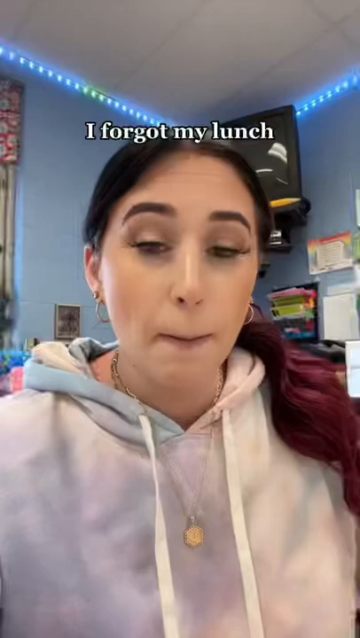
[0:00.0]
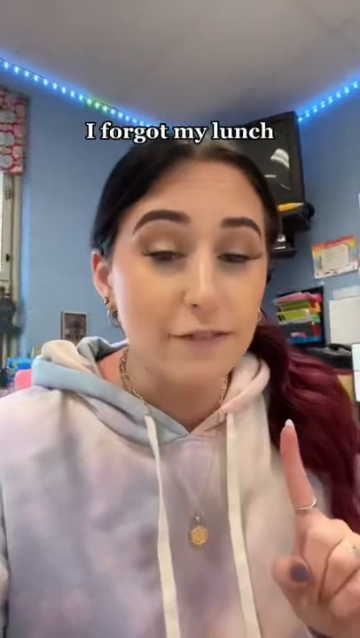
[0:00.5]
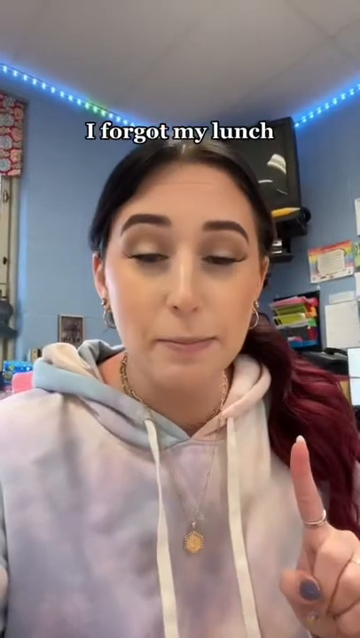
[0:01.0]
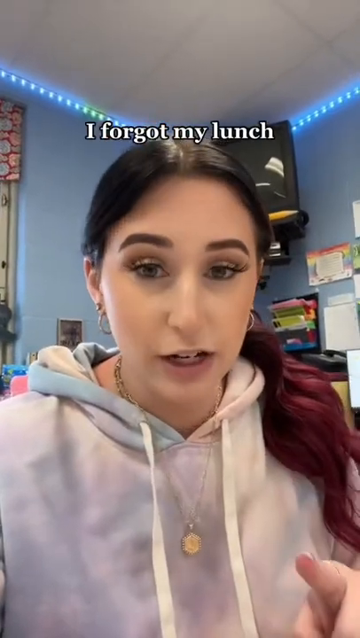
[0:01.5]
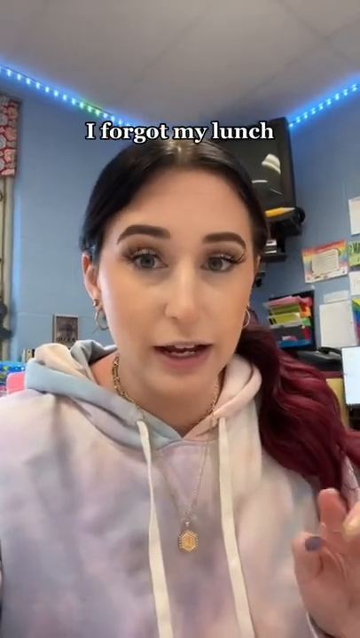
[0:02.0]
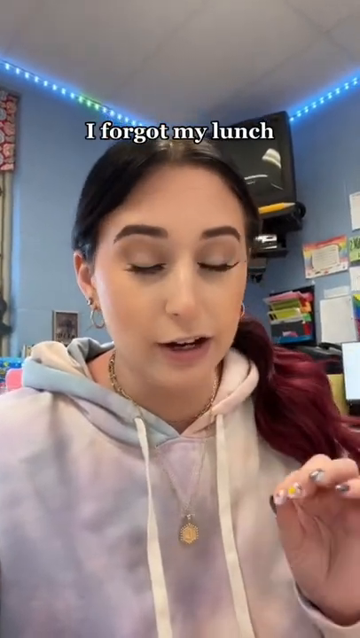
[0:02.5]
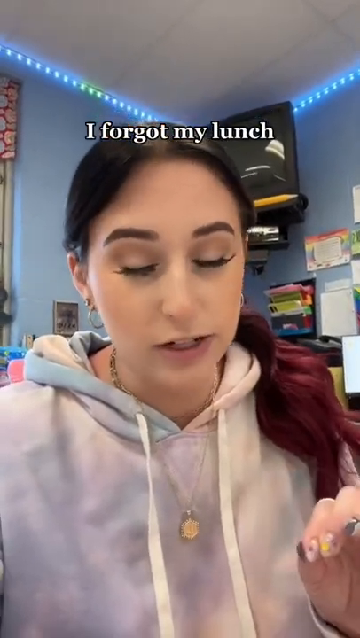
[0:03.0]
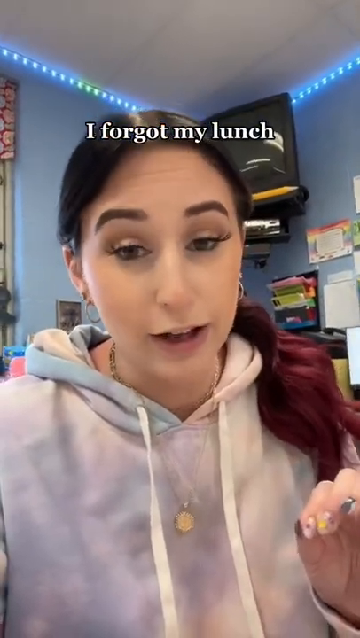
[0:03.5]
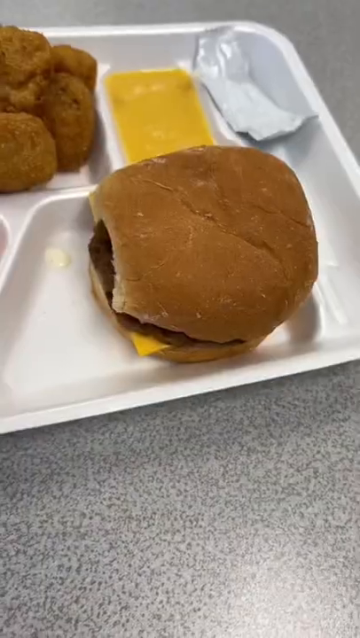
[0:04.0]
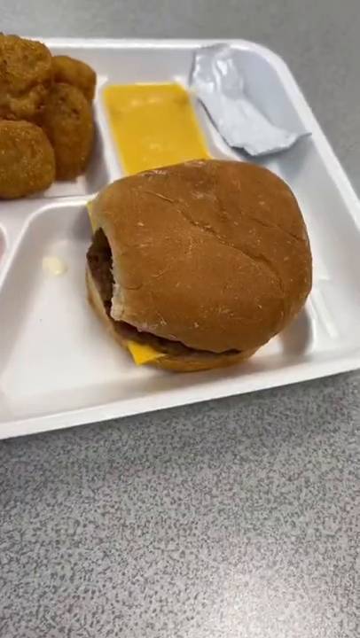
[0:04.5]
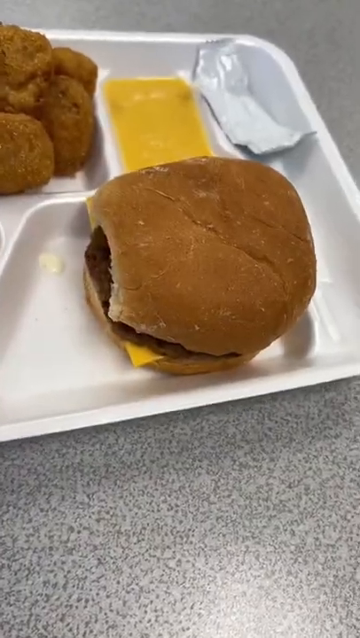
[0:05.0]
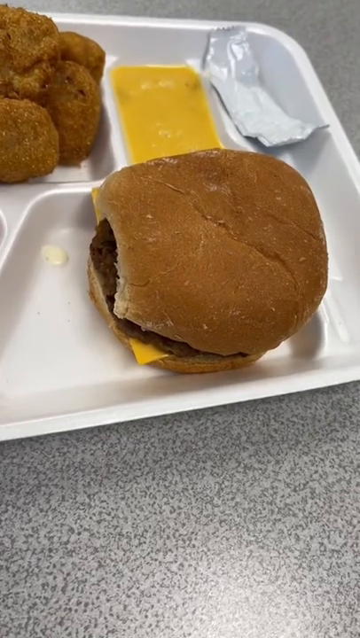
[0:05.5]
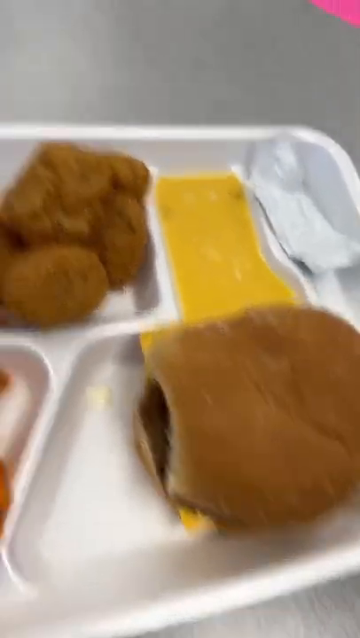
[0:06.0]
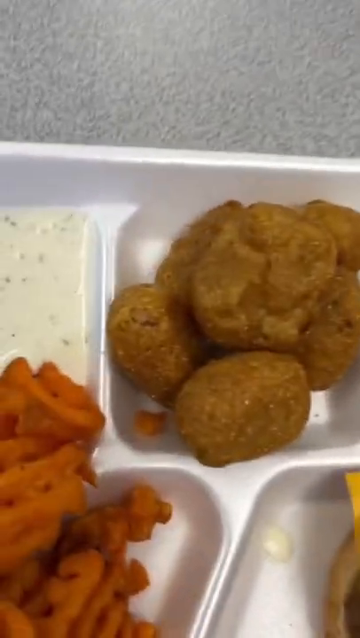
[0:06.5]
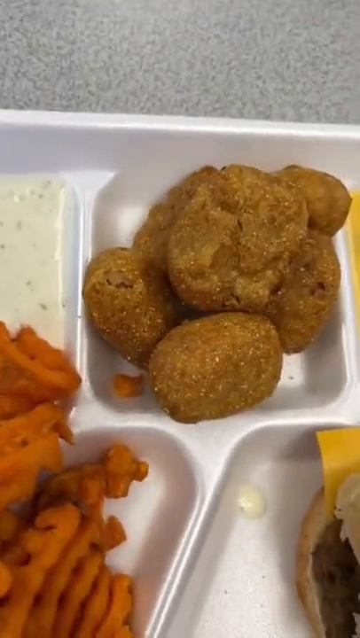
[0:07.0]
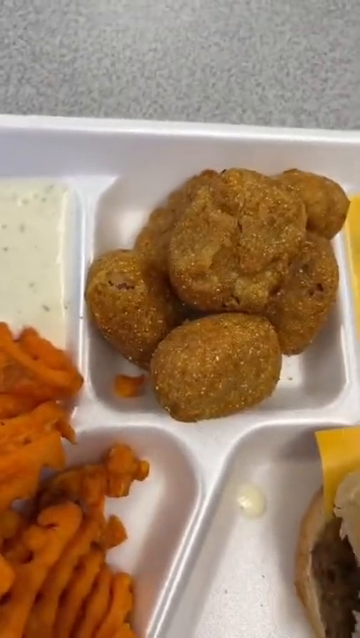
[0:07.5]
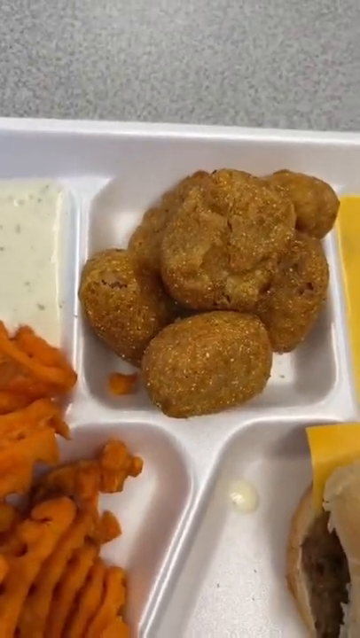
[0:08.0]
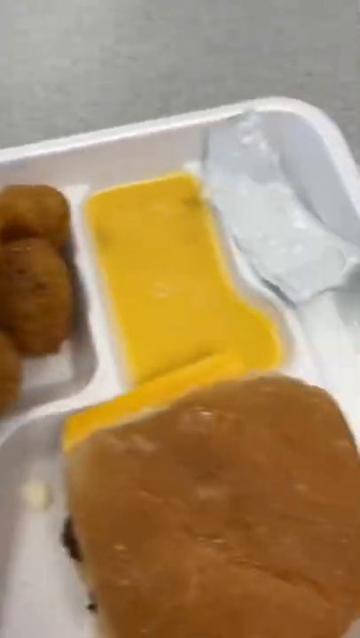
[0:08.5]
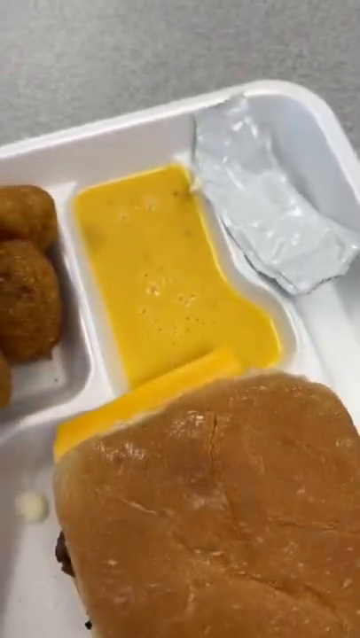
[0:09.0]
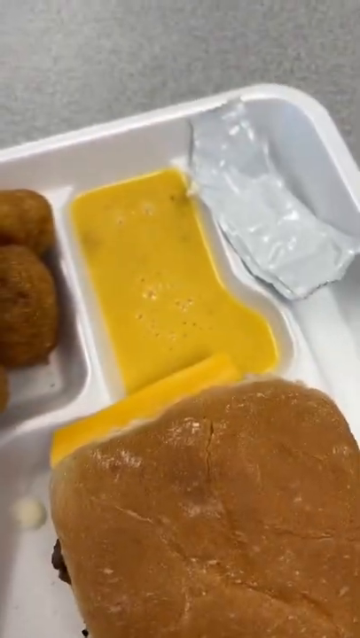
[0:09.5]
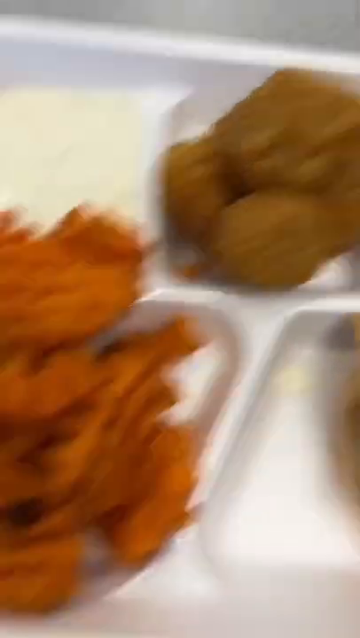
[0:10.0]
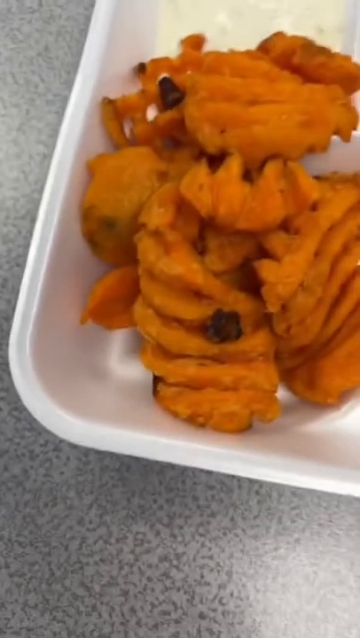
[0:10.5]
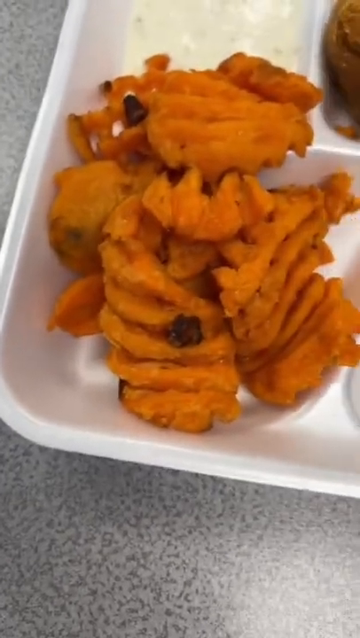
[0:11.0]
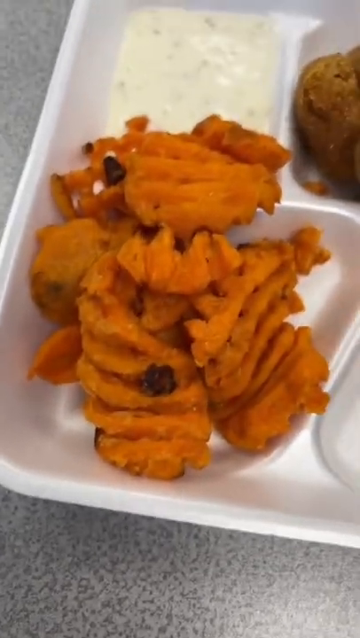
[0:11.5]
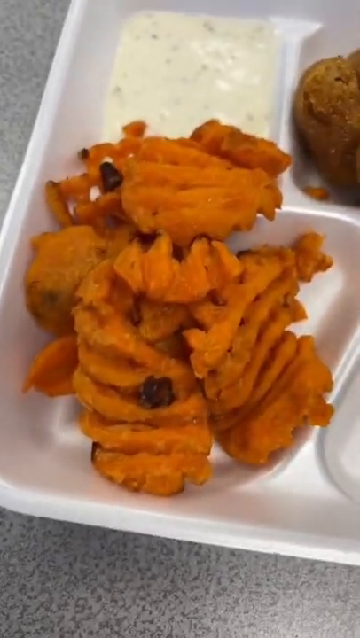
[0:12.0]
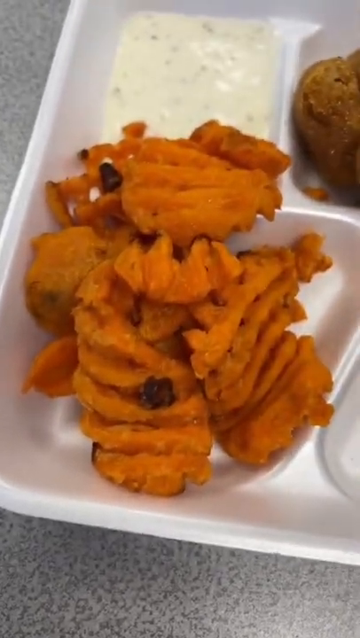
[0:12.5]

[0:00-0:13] A woman with long hair, wearing a sweatshirt and a necklace, talks to the screen. Above her, text reads "I forgot my lunch." She is probably in a bedroom. Her sweatshirt is a sort of whitish, pinkish color, and in the background there is a television set mounted in the corner and what may be Christmas lights along the ceiling. The next scene looks down on a school lunch on a white styrofoam tray: a cheeseburger, a yellow mustard or dipping sauce, some things that kind of look like chicken McNuggets, and orangey sweet potato fries. In the corner there seems to be what might be tartar sauce, though it is hard to tell, and there is a condiment packet that has been torn open. The table the tray is on is gray.